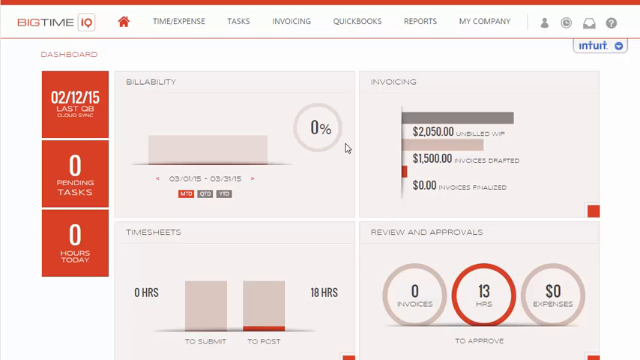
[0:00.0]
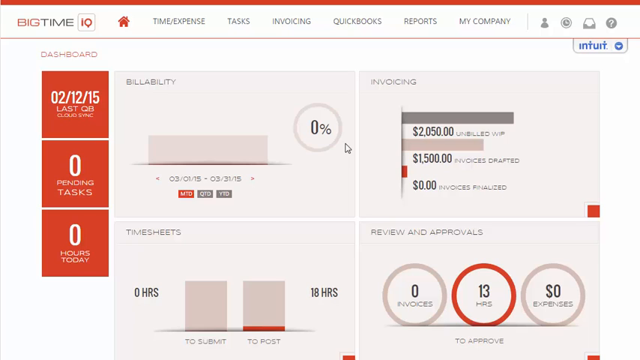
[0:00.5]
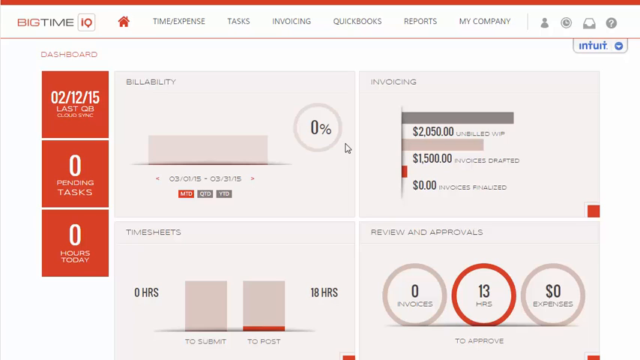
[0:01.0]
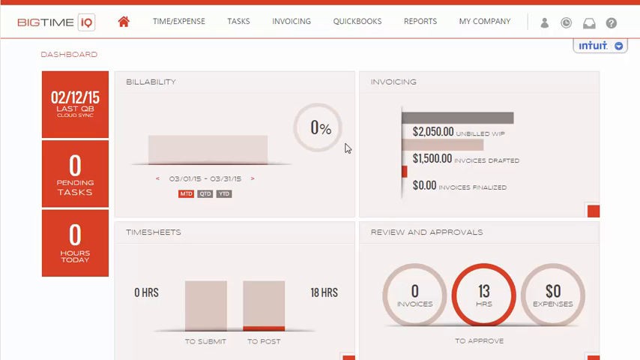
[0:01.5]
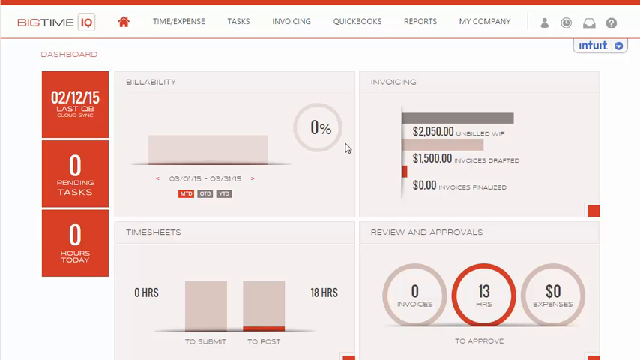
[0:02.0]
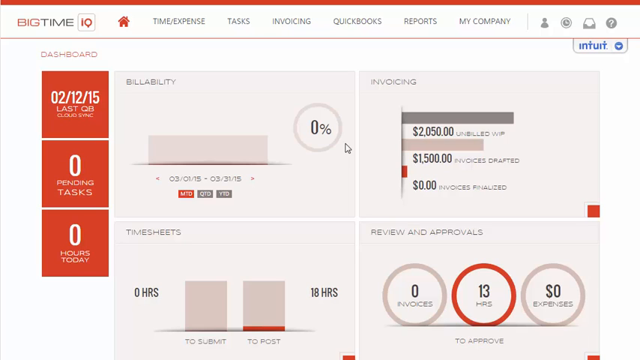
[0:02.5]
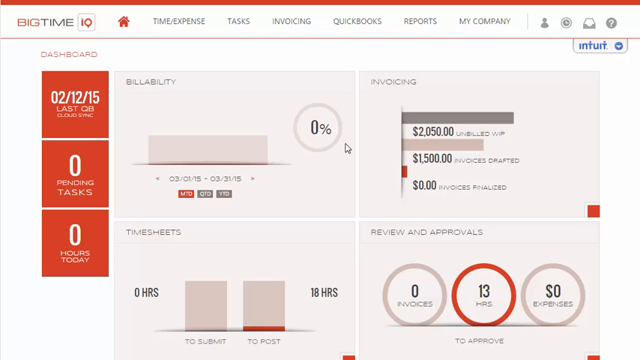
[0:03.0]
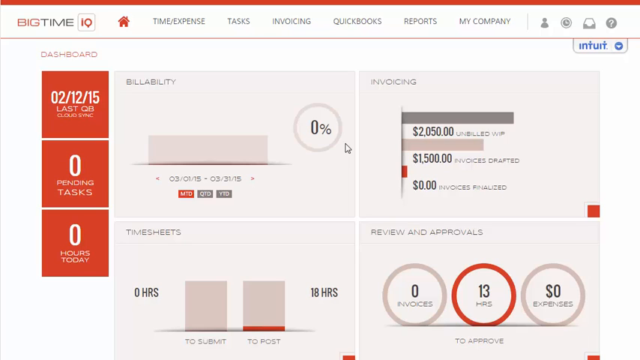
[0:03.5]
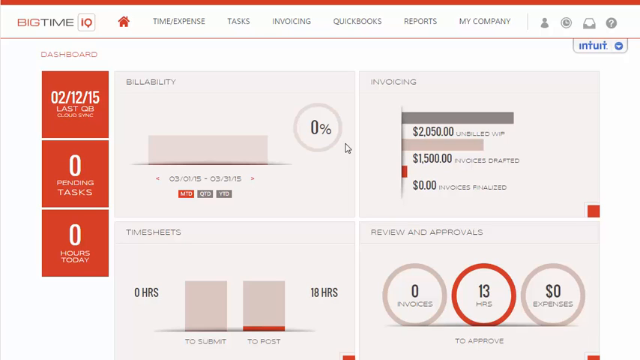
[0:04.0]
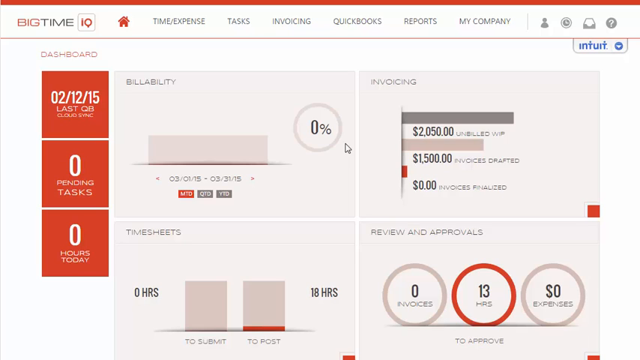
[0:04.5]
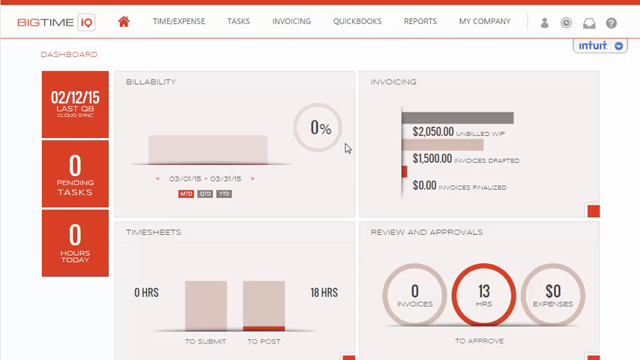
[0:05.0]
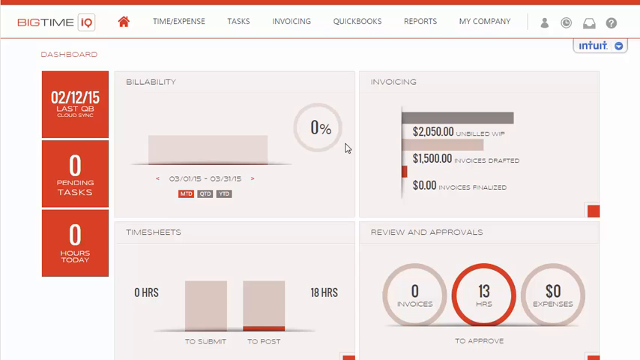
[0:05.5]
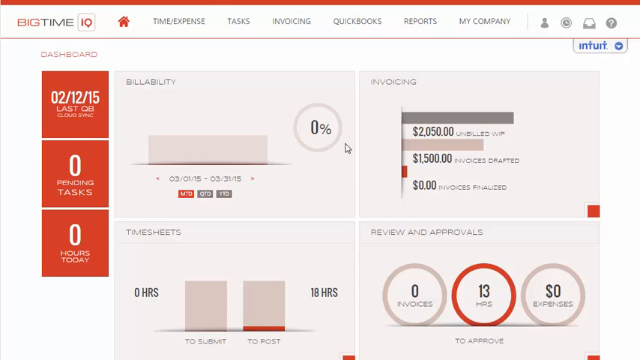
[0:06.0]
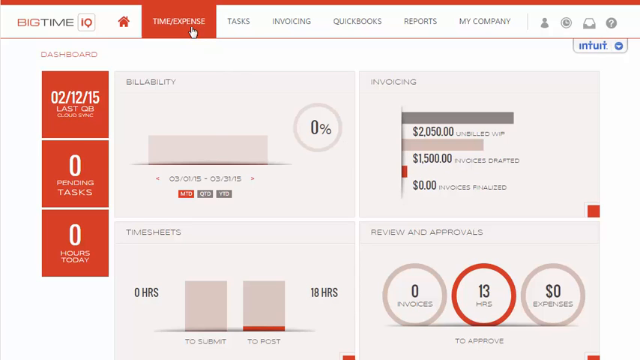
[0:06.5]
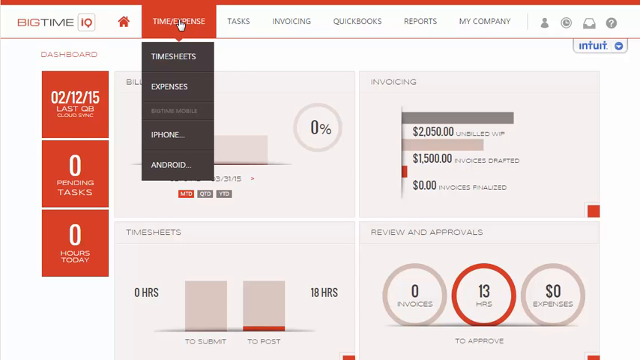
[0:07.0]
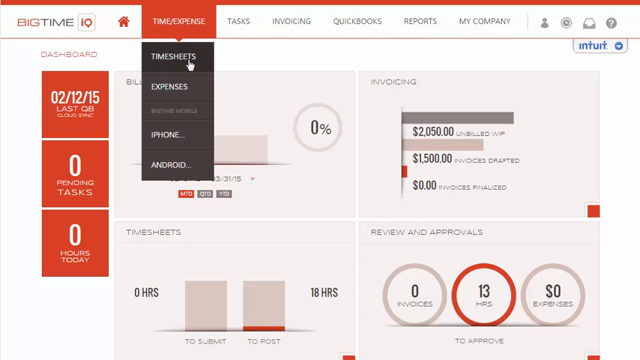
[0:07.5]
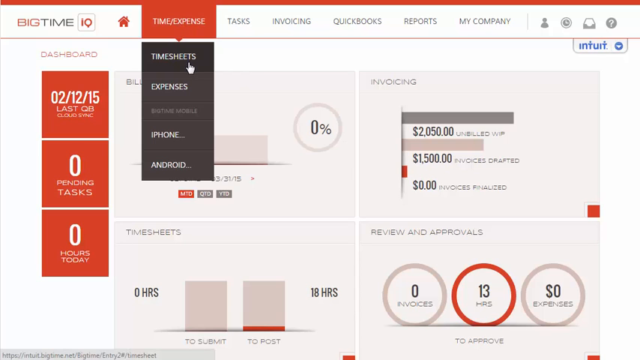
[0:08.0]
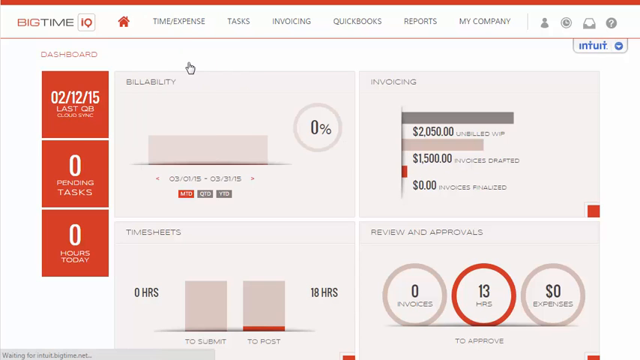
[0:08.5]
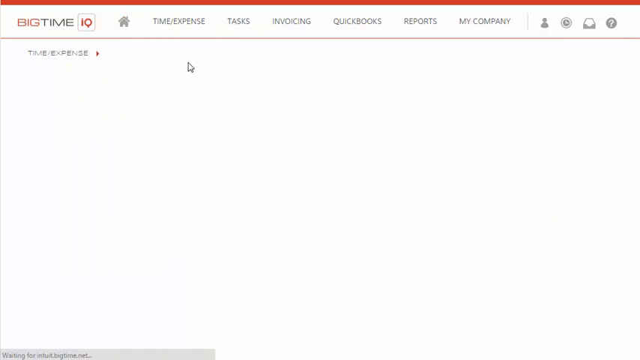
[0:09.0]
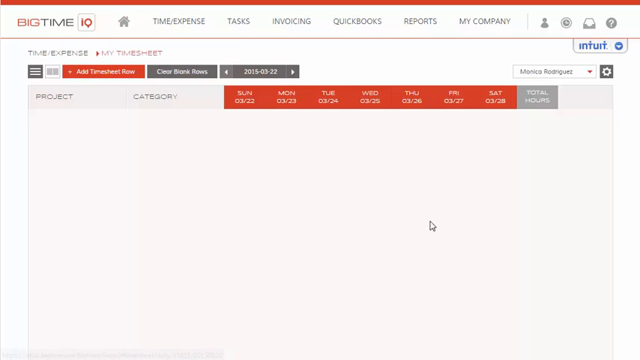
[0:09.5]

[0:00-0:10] The video shows what looks like a website with a primarily white background and red accents, displaying "Big Time IQ." A row of options runs across the top: homepage, time, expense, tasks, invoicing, QuickBooks, reports and my company. There are also some icons, such as a profile, mail, questions and one other. Below is a dashboard showing information: billability, "0%" invoicing, 2050 unbilled, 1500 invoices drafted and nothing finalized. A review and approval section shows 13 hours needing approval, zero expenses and zero invoices. The user goes up to time expense, appears to click something, and clicks on timesheets.